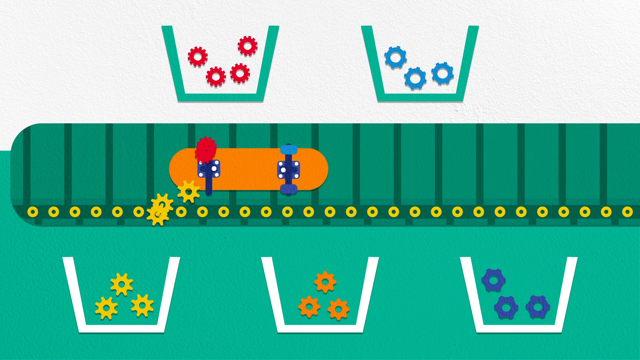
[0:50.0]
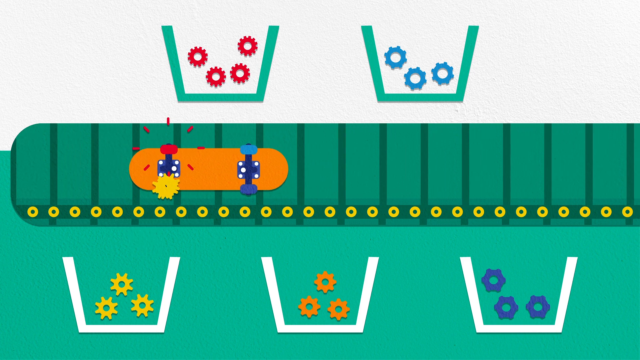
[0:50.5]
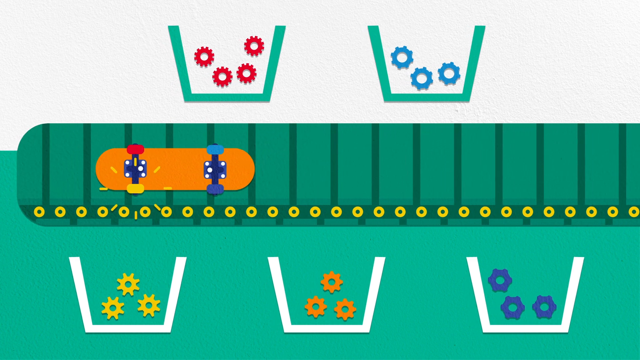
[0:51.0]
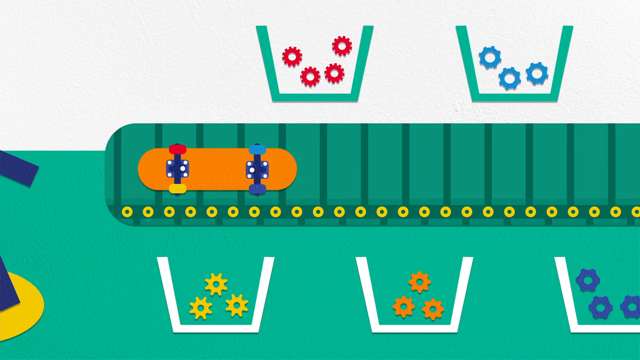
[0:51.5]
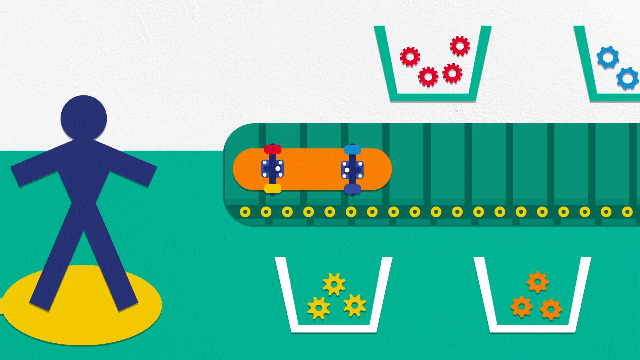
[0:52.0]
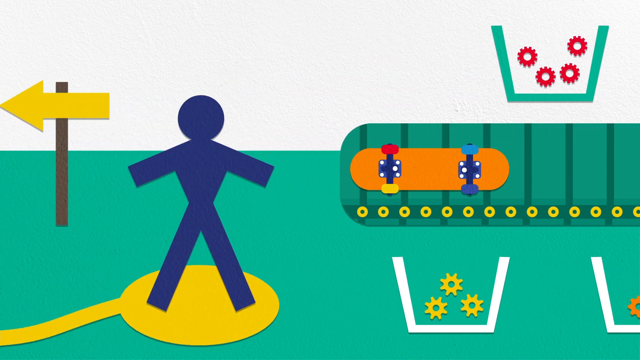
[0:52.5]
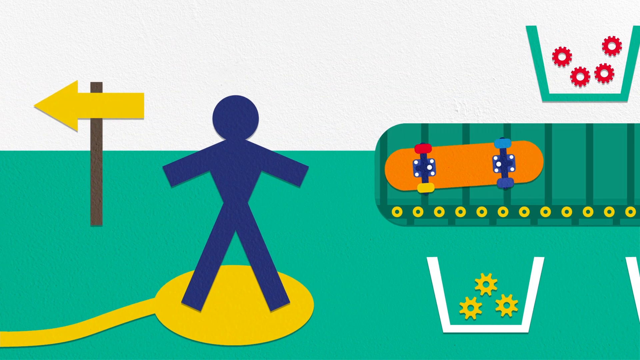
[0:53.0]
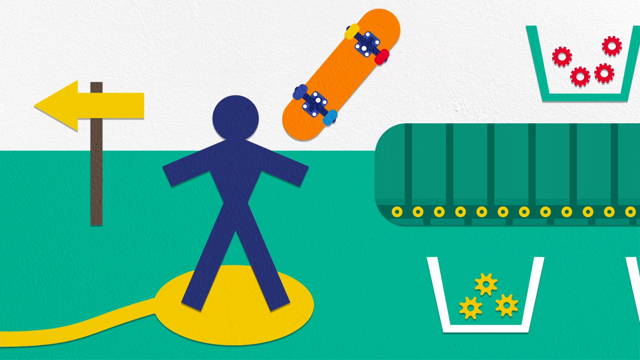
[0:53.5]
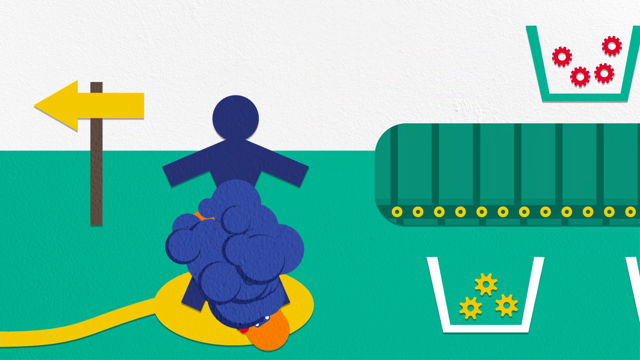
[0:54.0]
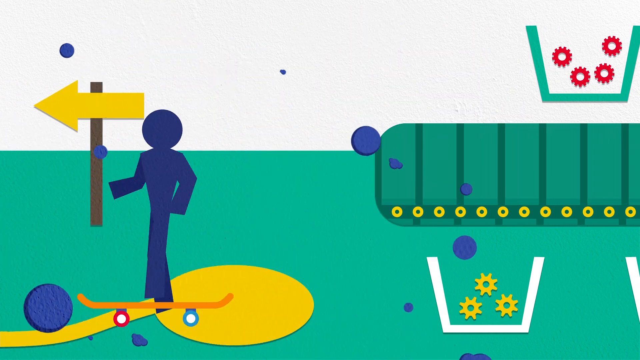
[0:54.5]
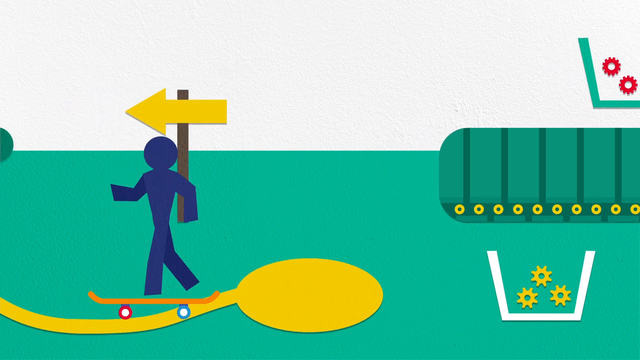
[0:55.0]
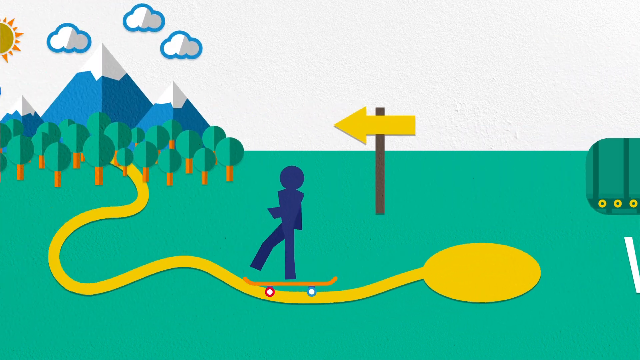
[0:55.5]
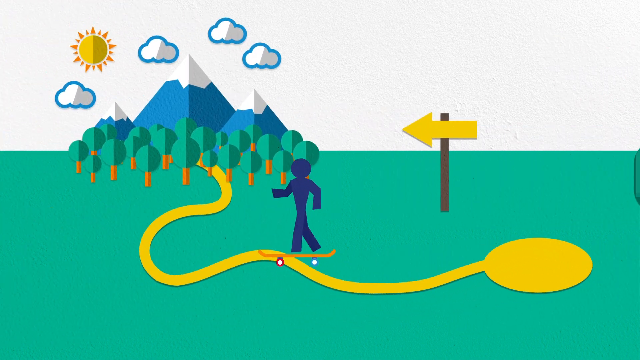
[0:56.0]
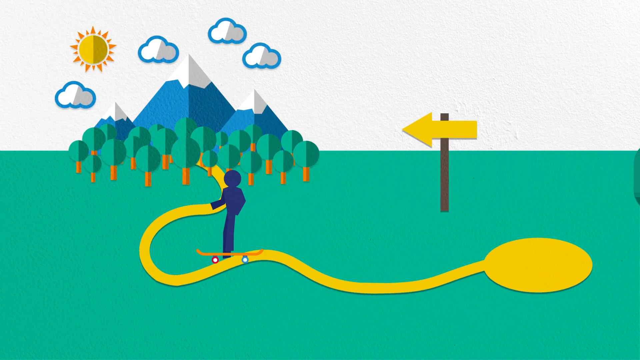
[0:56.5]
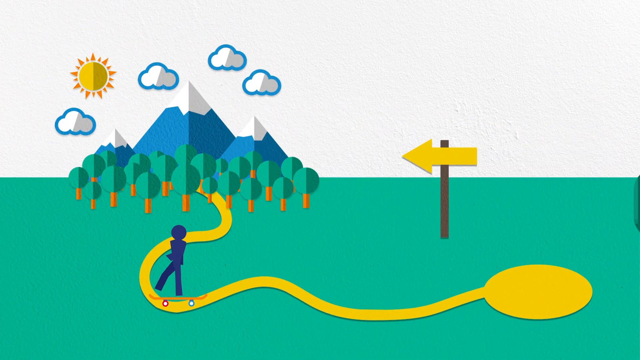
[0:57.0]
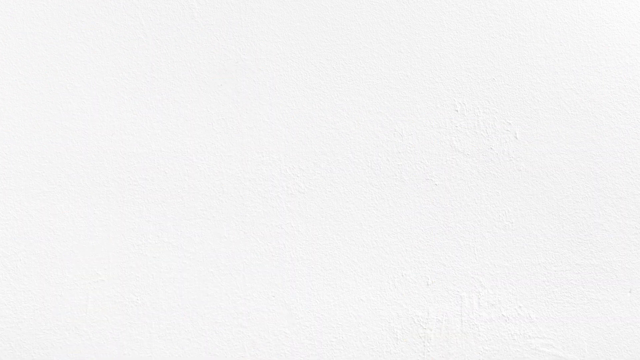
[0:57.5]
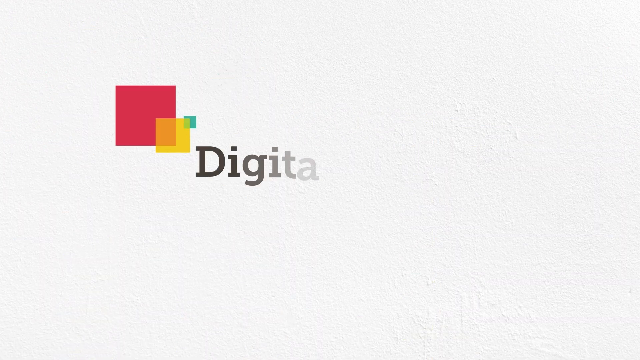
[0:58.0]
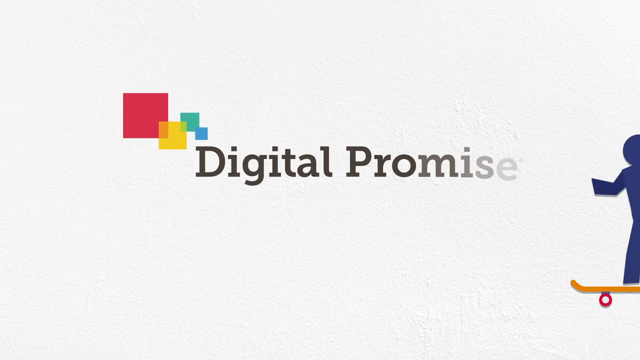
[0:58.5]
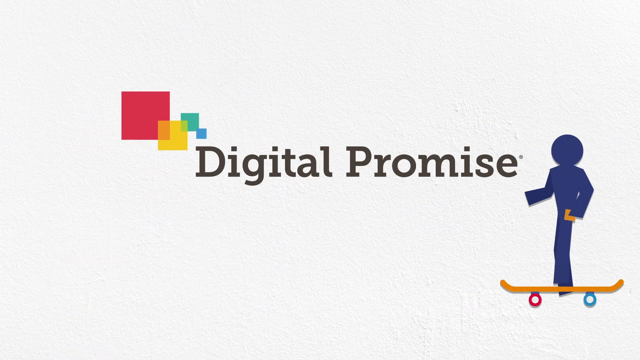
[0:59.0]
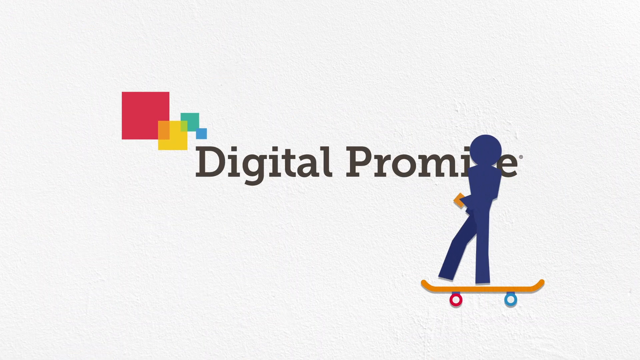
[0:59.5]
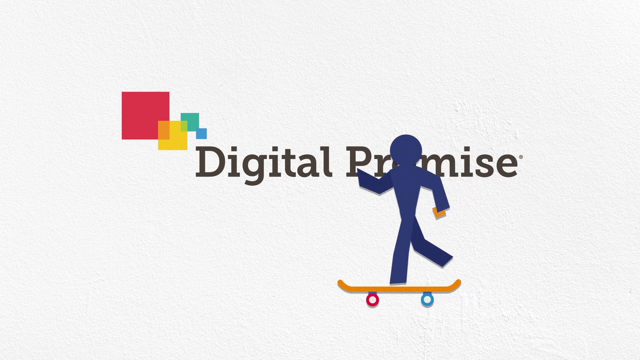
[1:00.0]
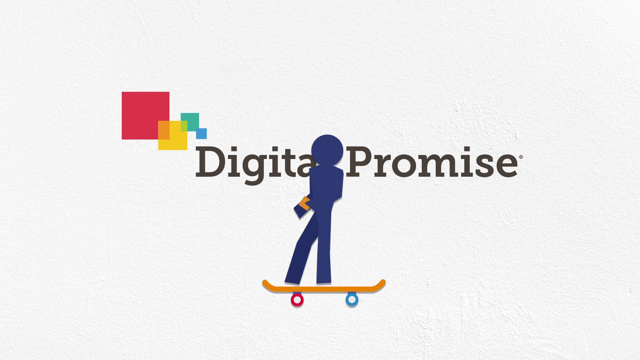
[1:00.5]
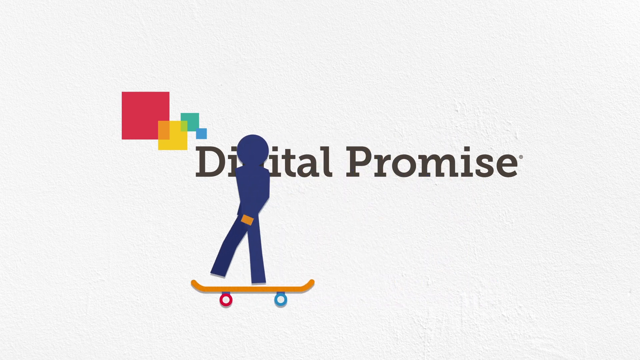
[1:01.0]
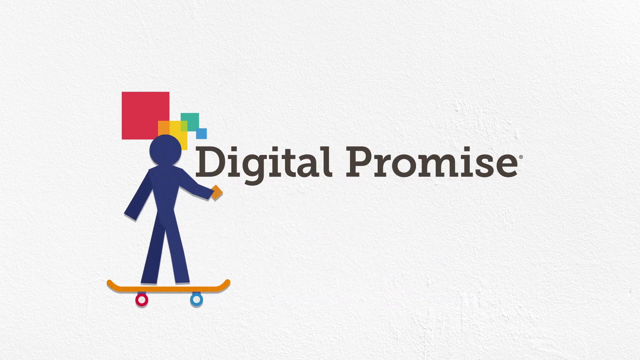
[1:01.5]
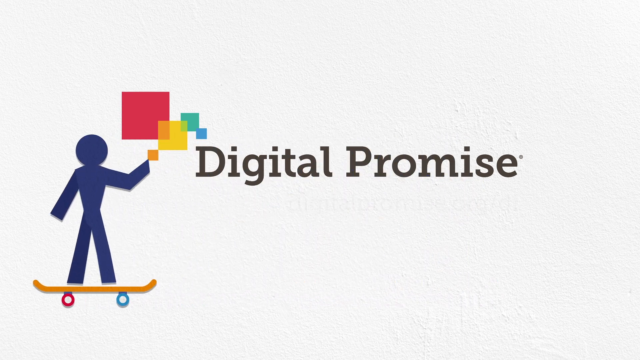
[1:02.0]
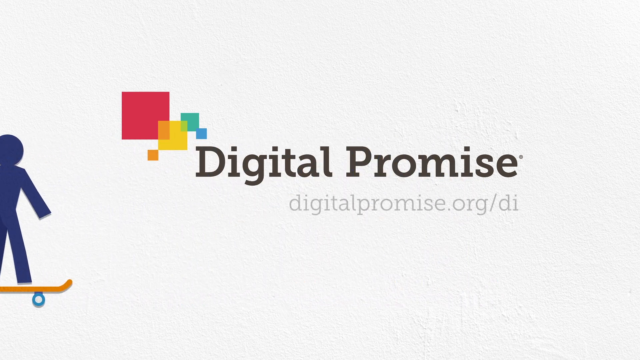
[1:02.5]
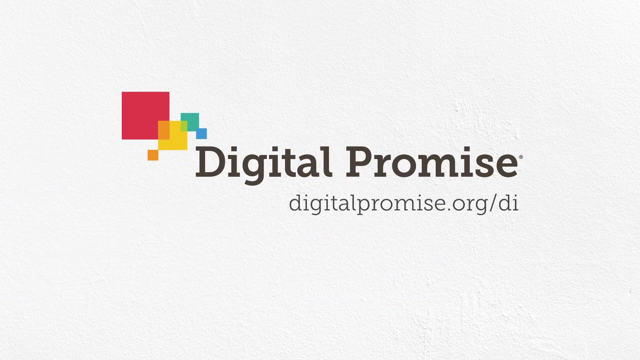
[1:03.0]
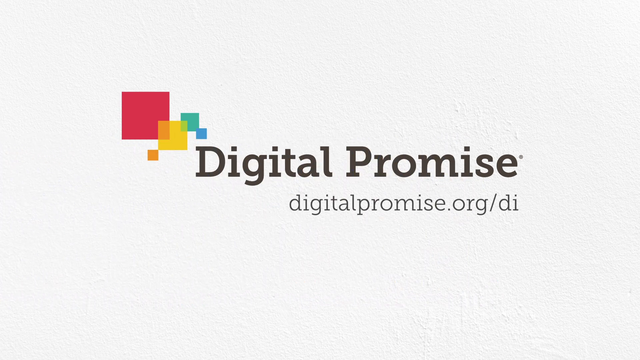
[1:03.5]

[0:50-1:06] The skateboard comes through on top of a green sheet that keeps rolling toward the place where the gears are in containers. The different colored gears are loaded onto the orange skateboard, which then jumps off and goes to the purple character. The character jumps on top of it and follows the arrowed path toward the mountains, passing green trees that are kind of like a forest before the mountains. There are also clouds and the yellow sun. The purple character then moves through the text "digital promise", riding a green skateboard with red and blue wheels and holding a box that joins up with other boxes of different sizes and colors. Under "digital promise" is the text "digitalpromise.org/di".